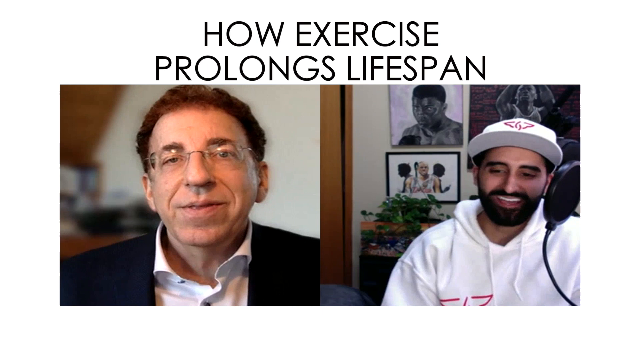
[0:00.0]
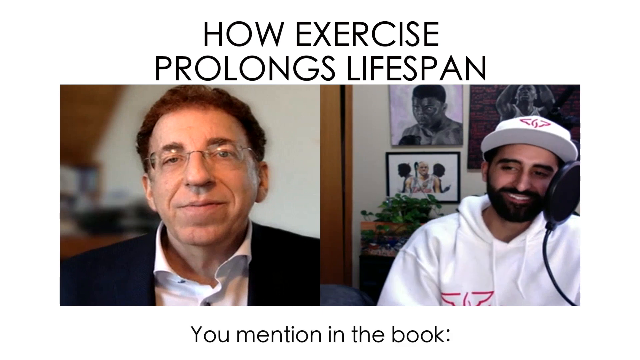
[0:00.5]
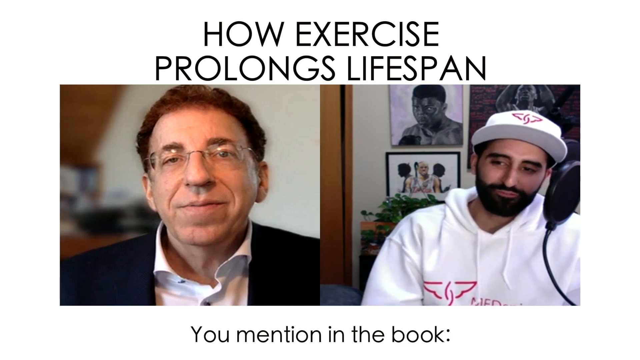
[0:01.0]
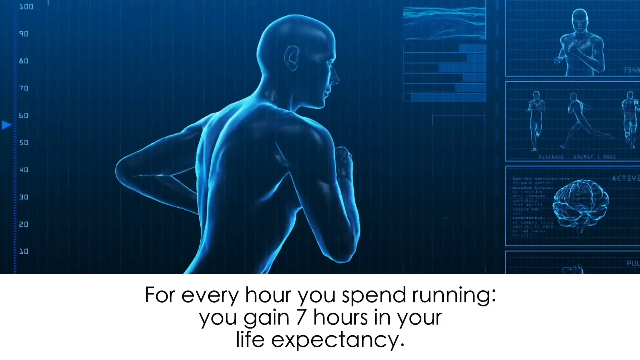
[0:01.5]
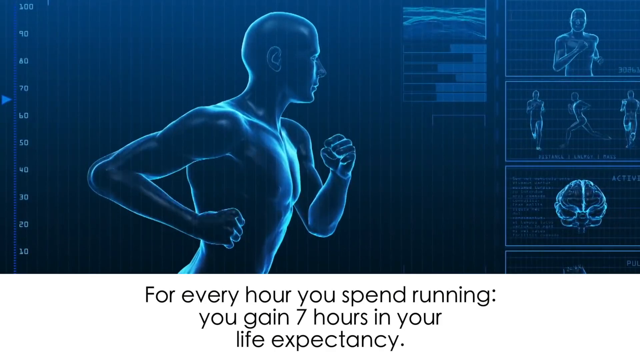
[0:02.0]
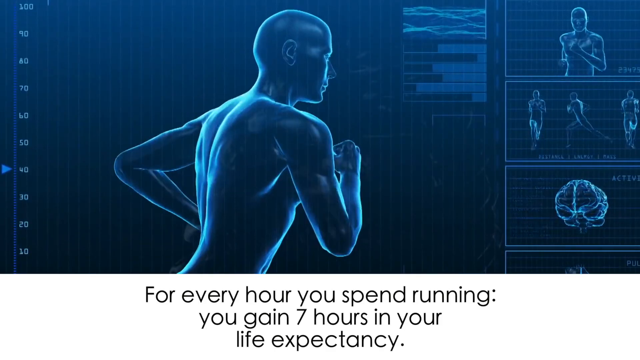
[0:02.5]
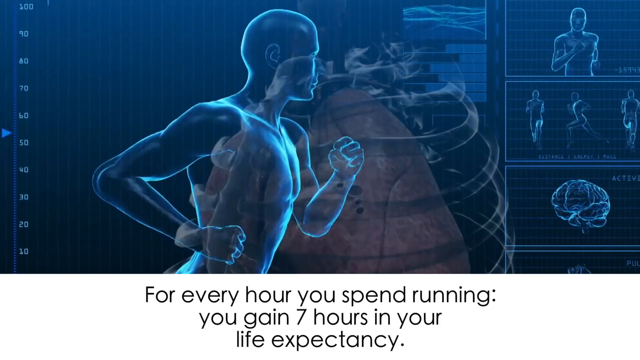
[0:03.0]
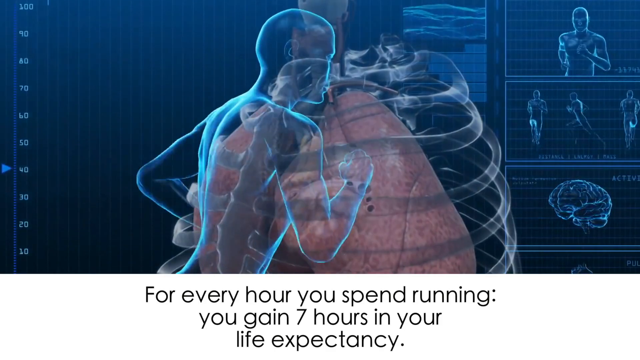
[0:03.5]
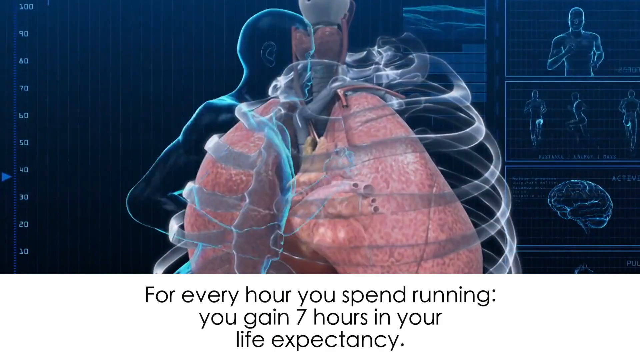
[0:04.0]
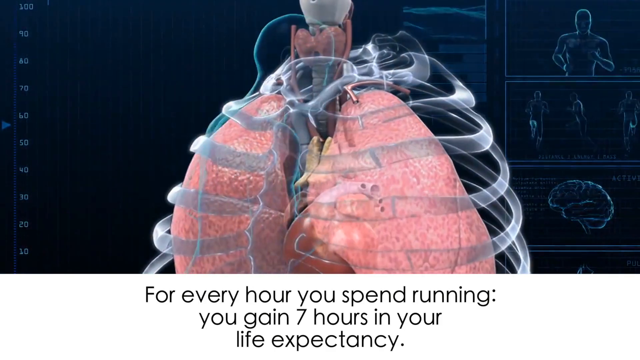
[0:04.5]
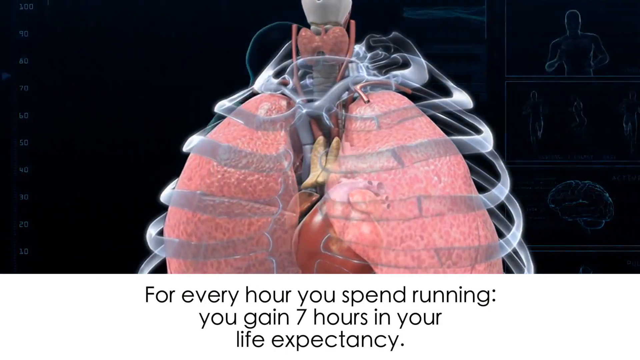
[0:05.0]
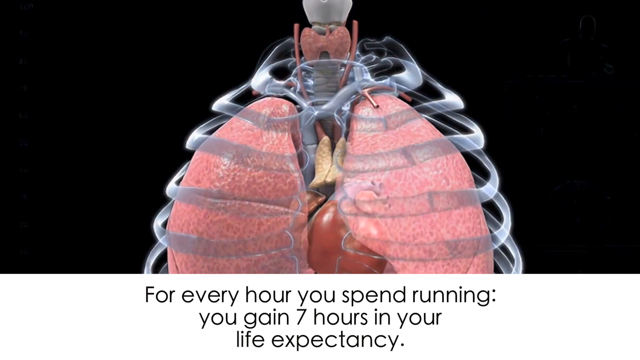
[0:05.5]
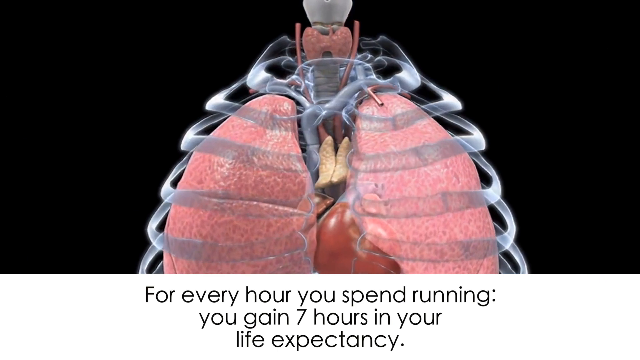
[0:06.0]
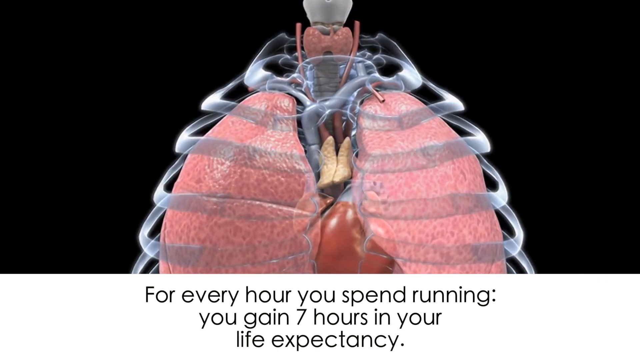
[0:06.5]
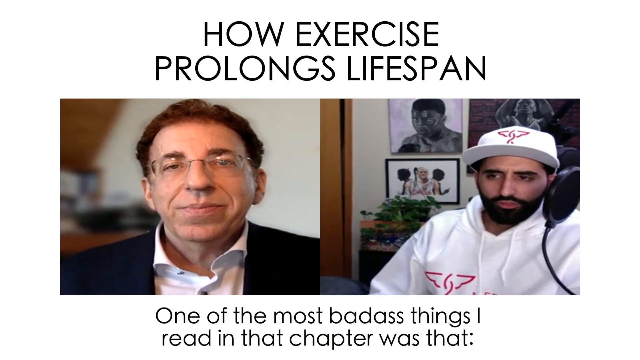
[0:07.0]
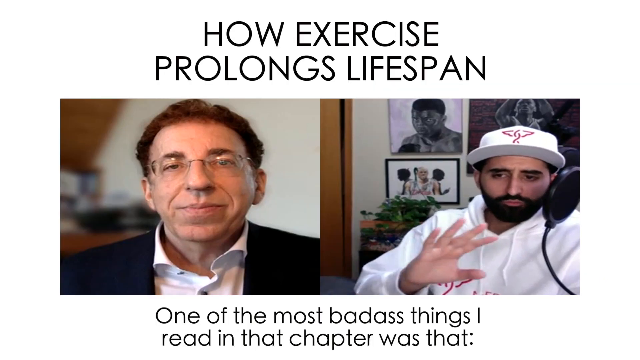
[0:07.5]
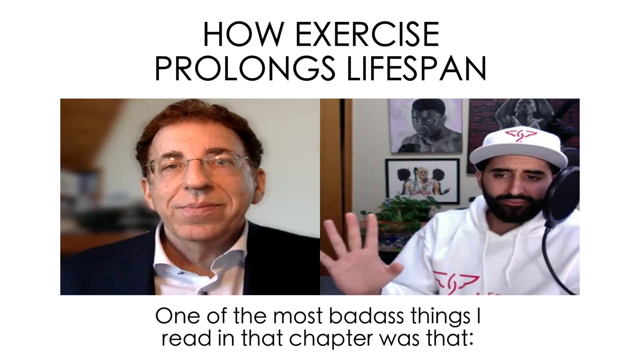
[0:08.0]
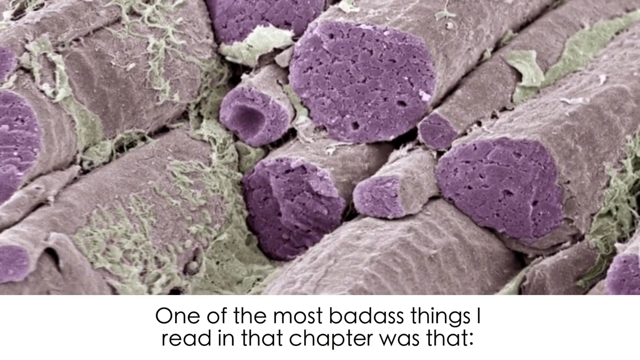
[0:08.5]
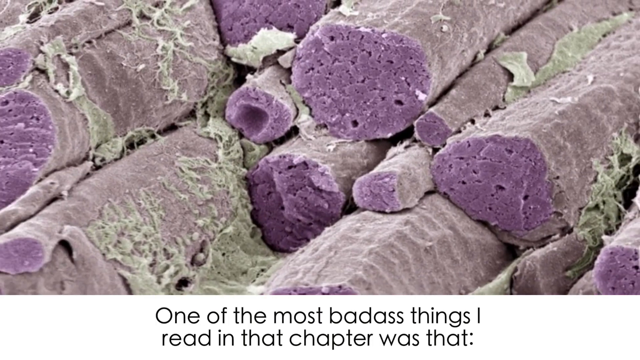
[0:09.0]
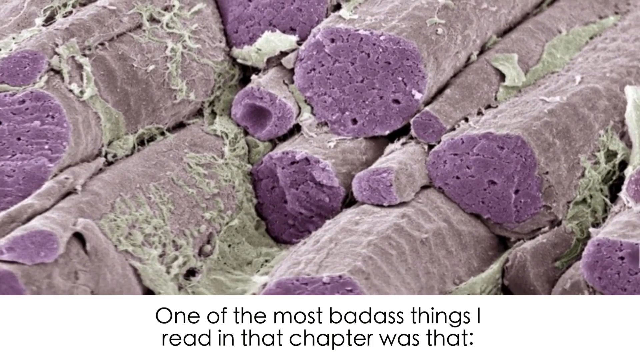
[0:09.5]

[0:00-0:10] The video begins with a title card whose text includes "for a long life". Two people are speaking, split between two cameras. The one on the left wears a suit and glasses; the person on the right wears what looks like a white cap and a matching white hoodie and speaks into a microphone. Both seem to be in a home setting, speaking remotely. Text at the bottom reads "you mentioned the book for every hours you spend running you gain seven hours in your life expectancy". The screen then changes to an animation of a man running, which looks very scientific, with charts and activity happening on the right, followed by an animation of the lungs.